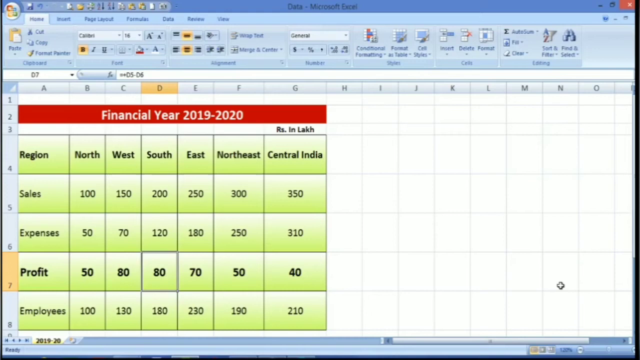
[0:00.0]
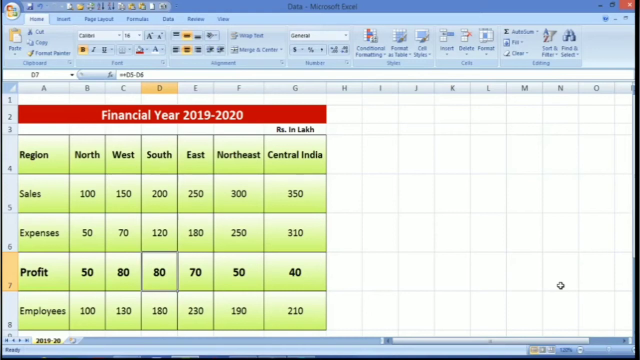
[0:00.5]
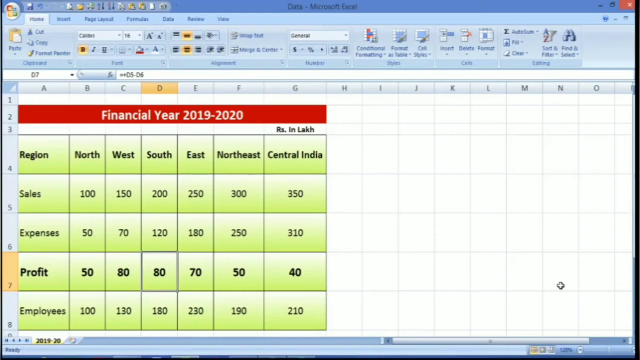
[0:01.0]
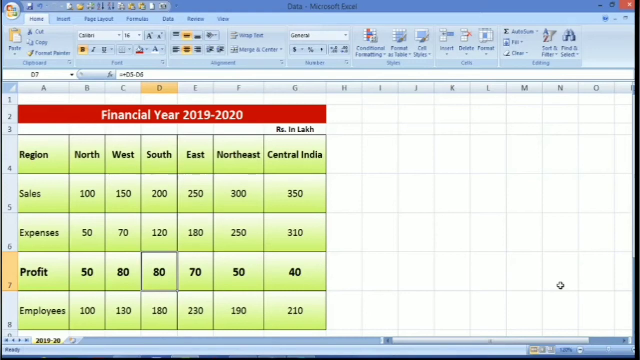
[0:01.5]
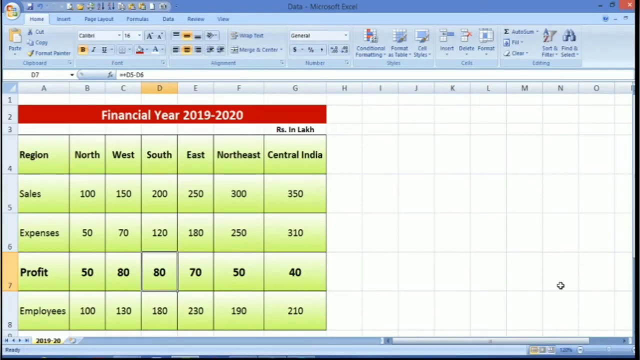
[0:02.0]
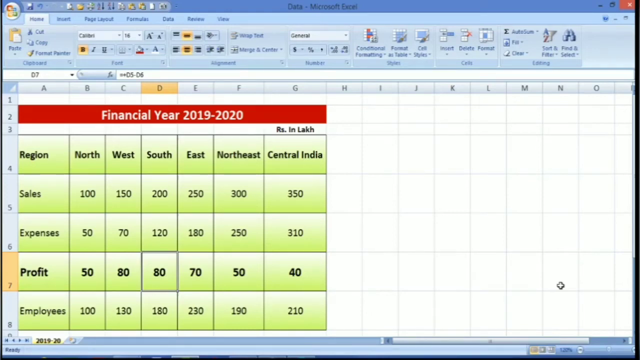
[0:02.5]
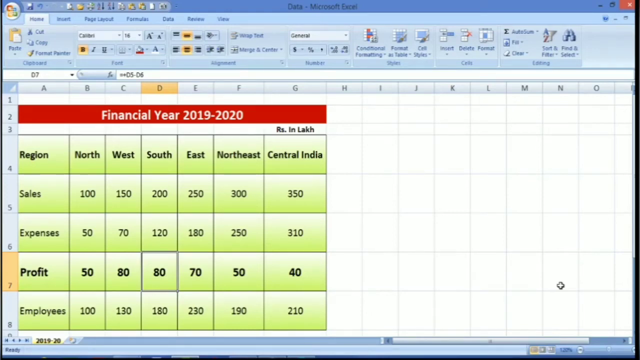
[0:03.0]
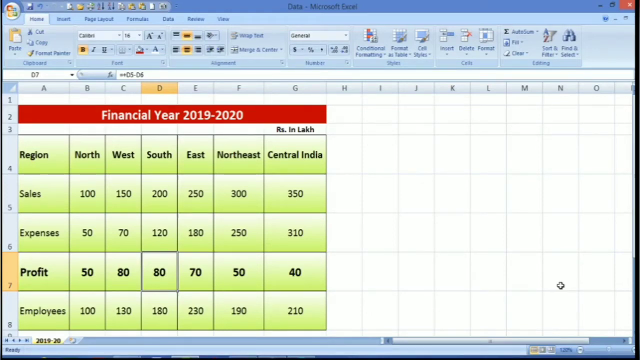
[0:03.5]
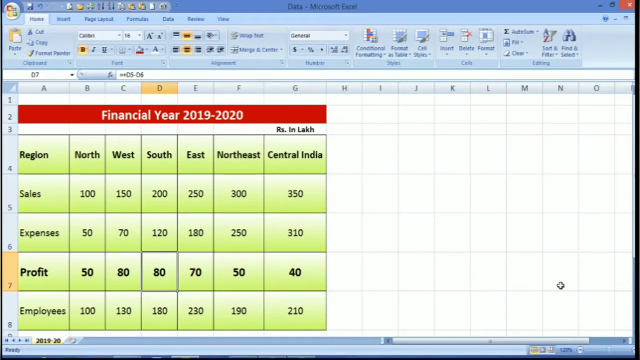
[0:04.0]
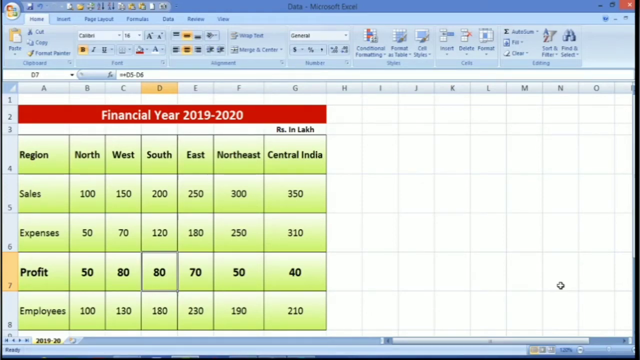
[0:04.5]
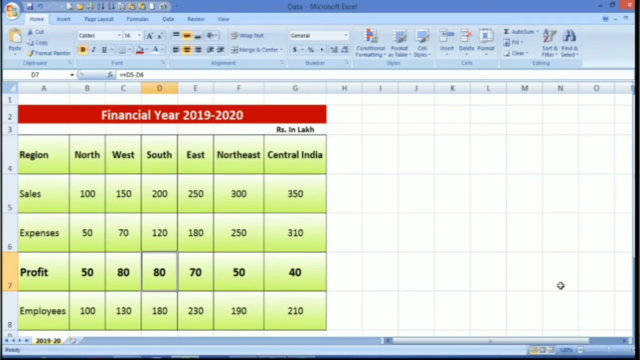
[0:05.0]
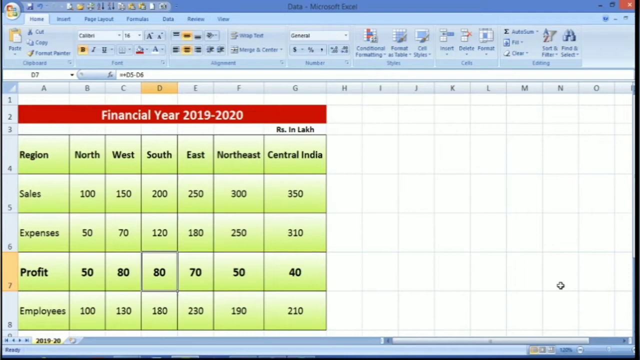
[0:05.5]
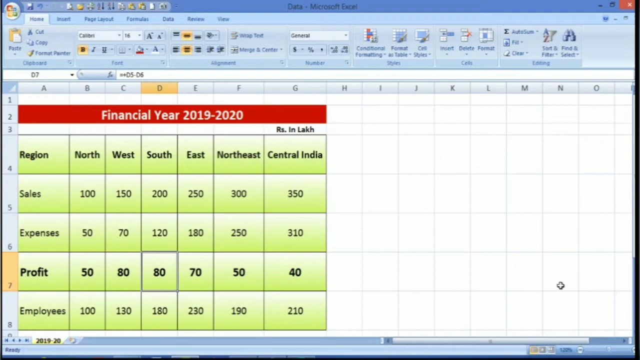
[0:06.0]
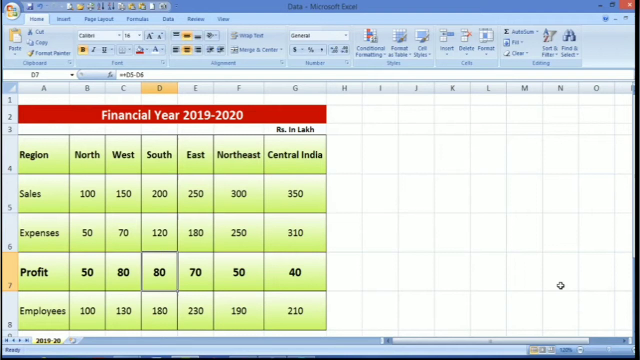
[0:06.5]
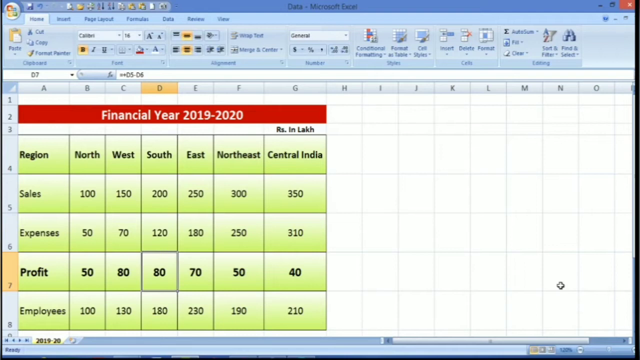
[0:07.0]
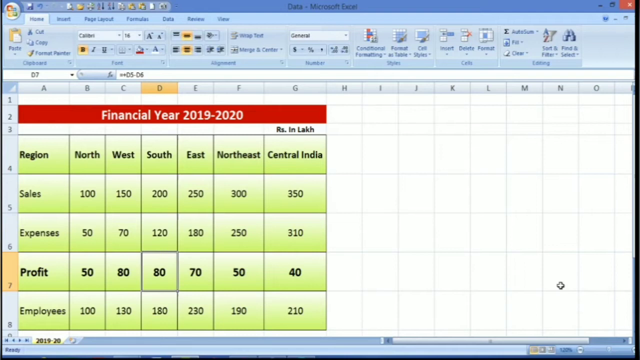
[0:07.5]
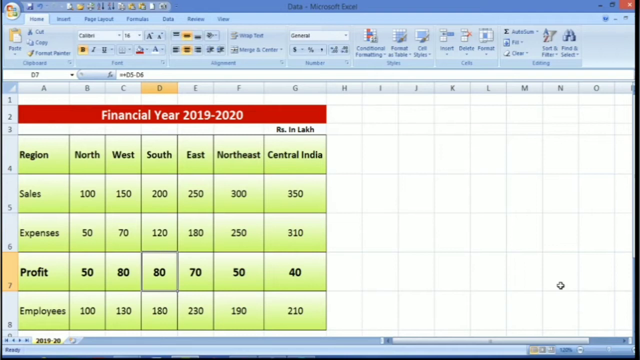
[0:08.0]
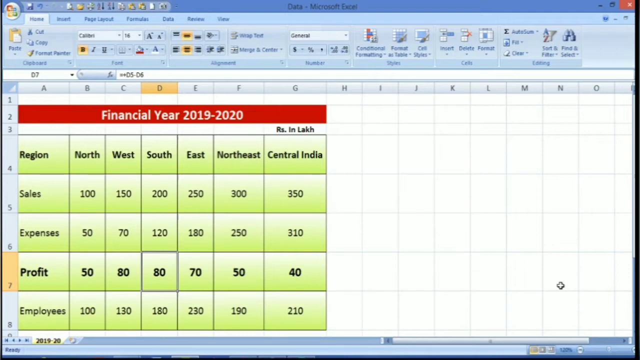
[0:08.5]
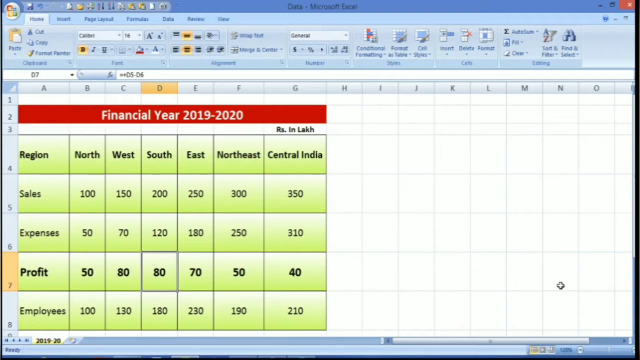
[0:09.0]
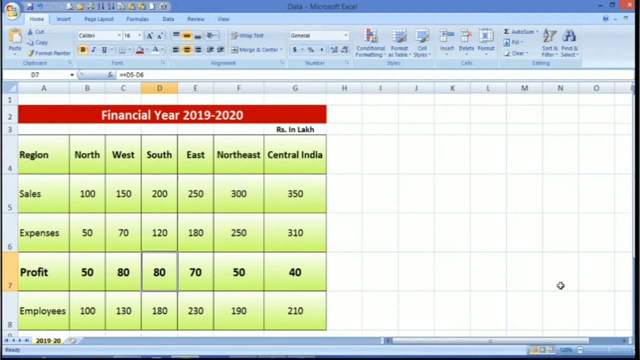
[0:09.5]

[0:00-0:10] An open spreadsheet is shown, apparently in Microsoft Excel. Along the top is the typical Excel menu bar with various icons for different commands. Below it is a series of tabs, and the Home tab appears to be selected since it is slightly lighter in color, with its usual buttons underneath. The main sheet holds a grid headed "financial year 2019 to 2020". Down the left are region, sales, expenses and profit, and across the top are Northwest, South, East, Northeast and Central India.